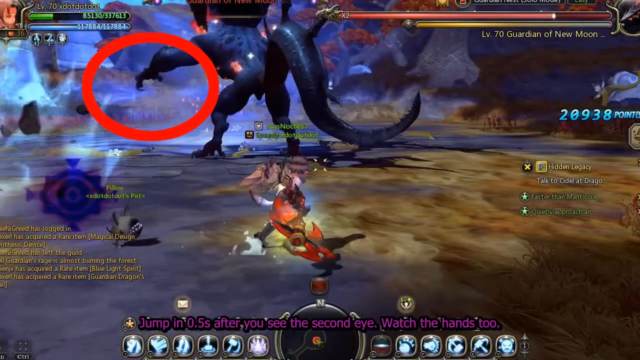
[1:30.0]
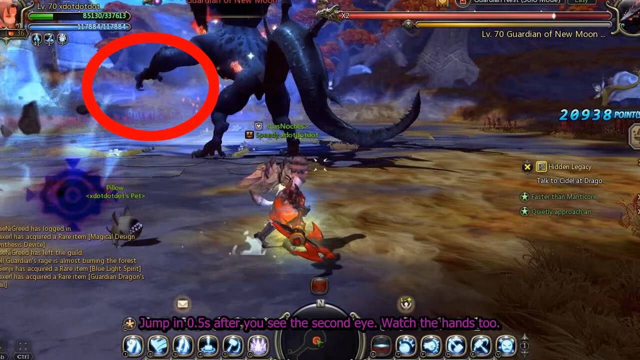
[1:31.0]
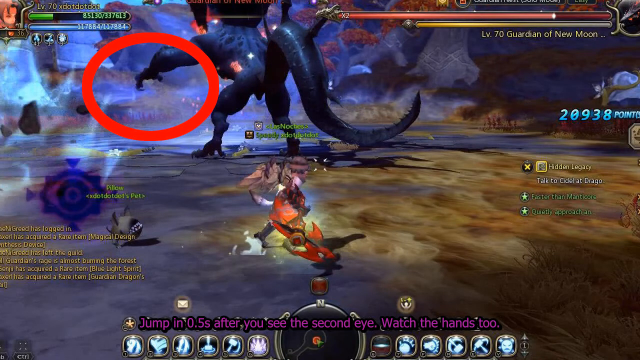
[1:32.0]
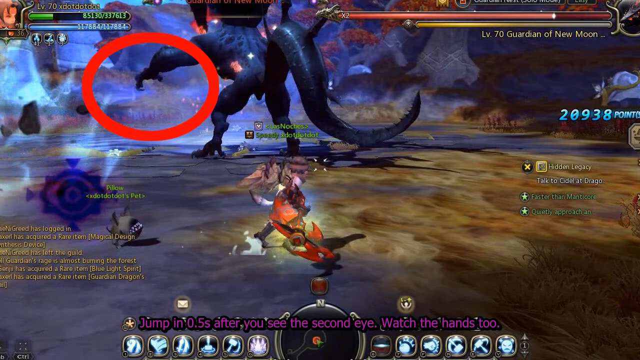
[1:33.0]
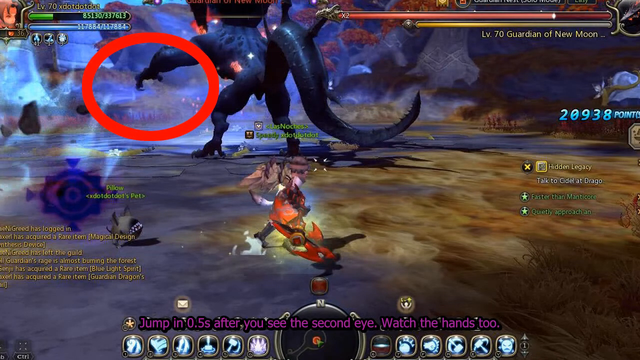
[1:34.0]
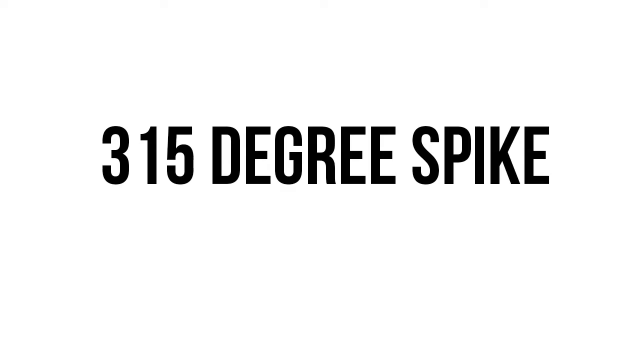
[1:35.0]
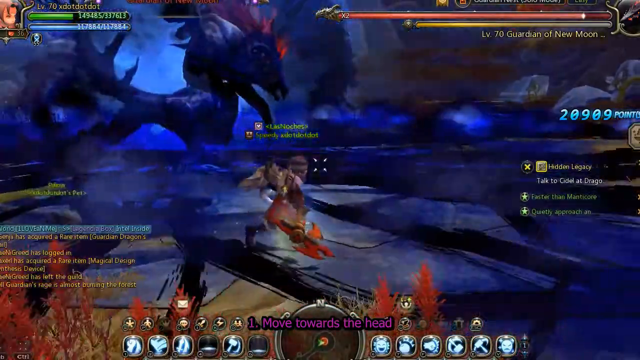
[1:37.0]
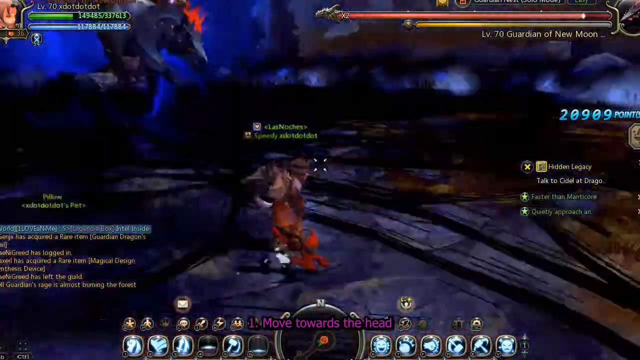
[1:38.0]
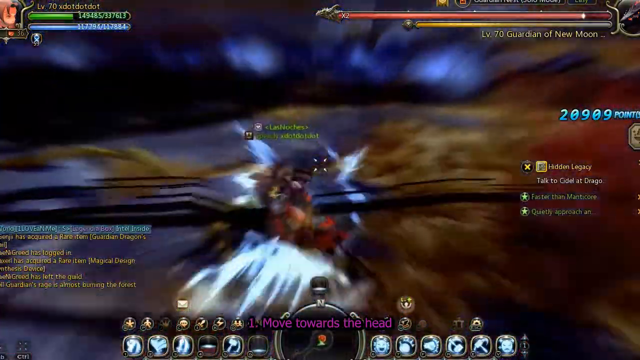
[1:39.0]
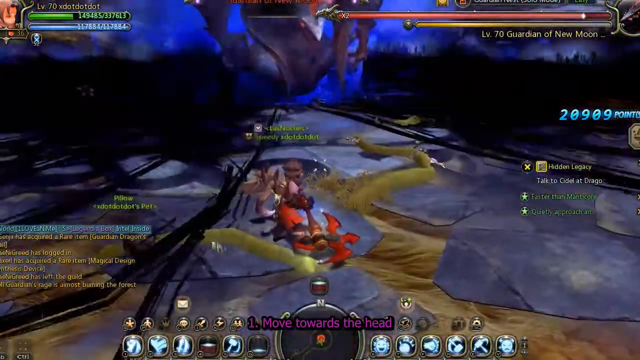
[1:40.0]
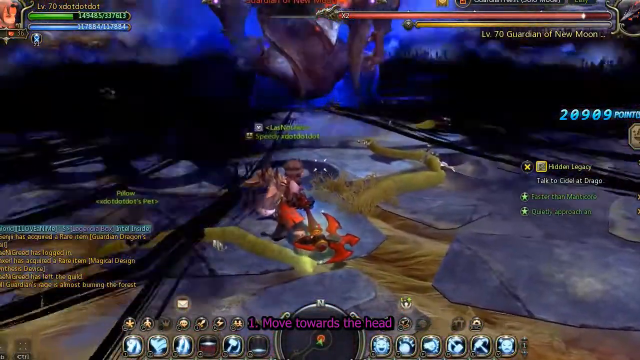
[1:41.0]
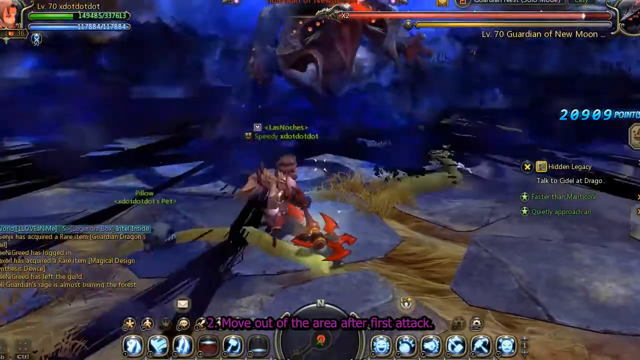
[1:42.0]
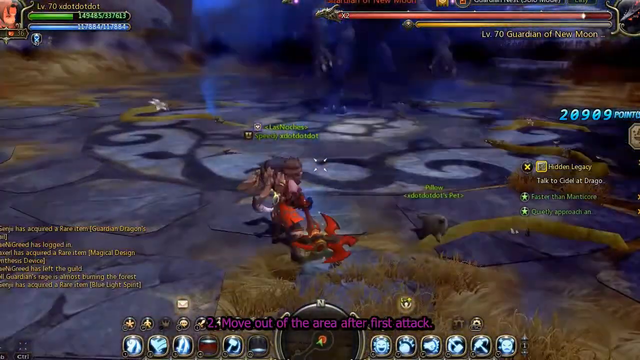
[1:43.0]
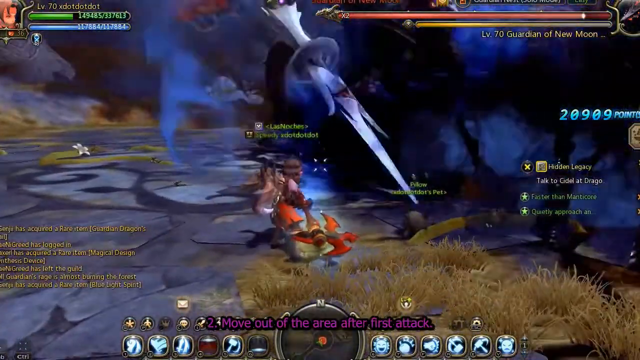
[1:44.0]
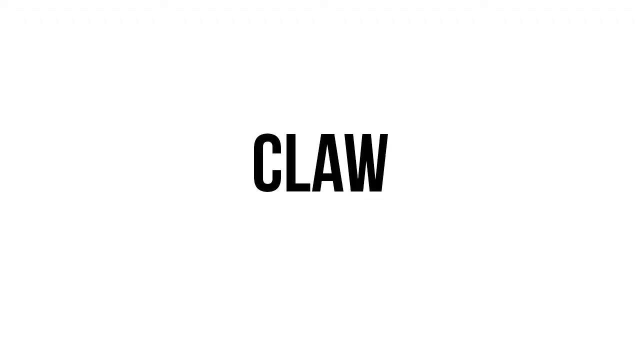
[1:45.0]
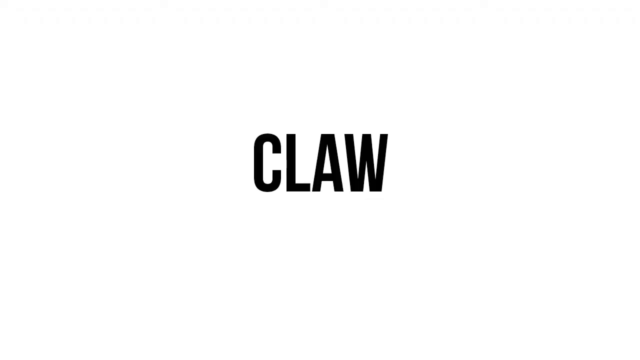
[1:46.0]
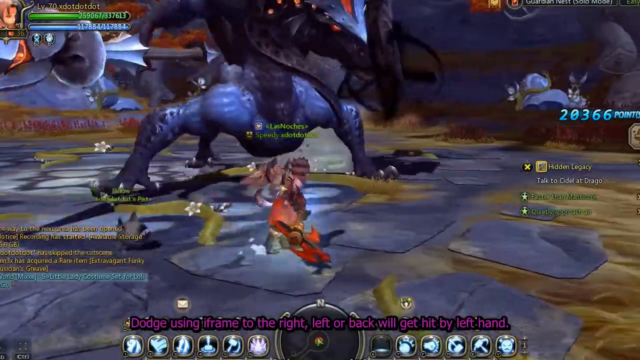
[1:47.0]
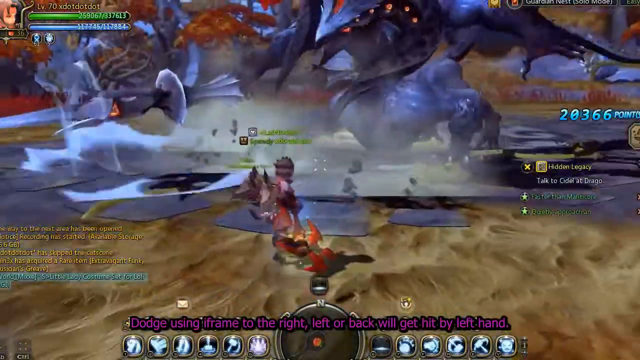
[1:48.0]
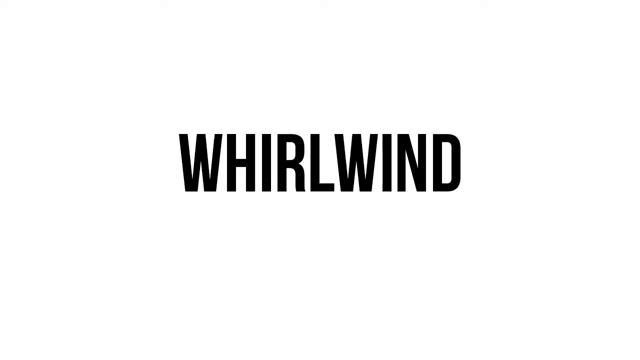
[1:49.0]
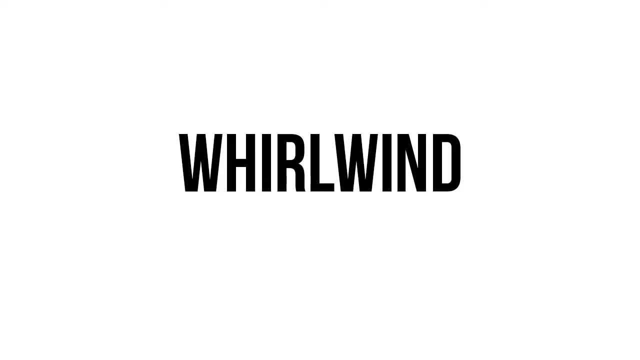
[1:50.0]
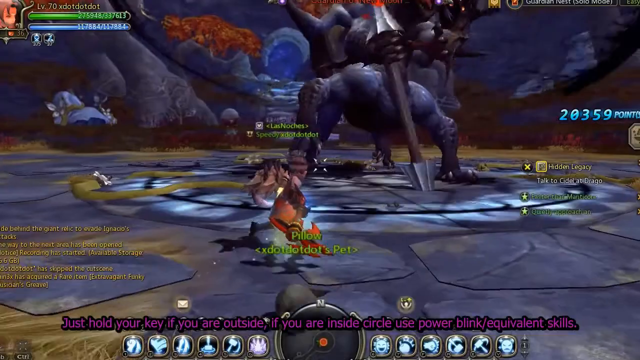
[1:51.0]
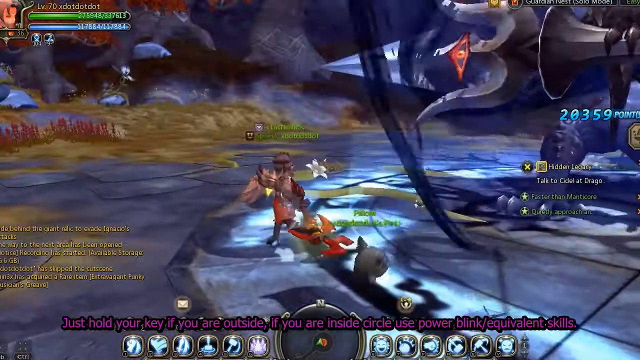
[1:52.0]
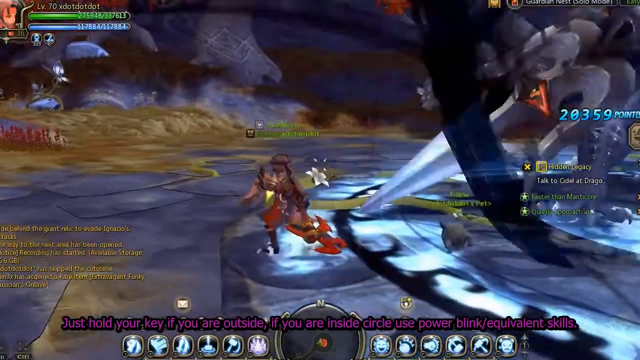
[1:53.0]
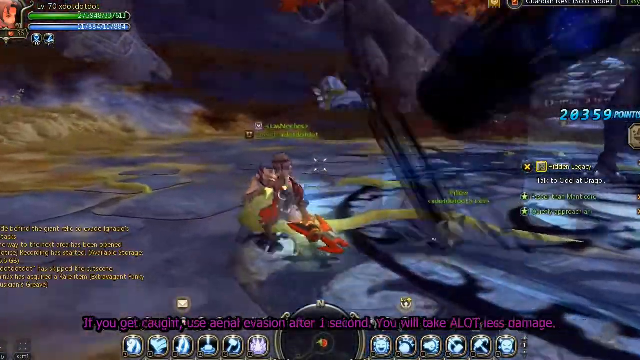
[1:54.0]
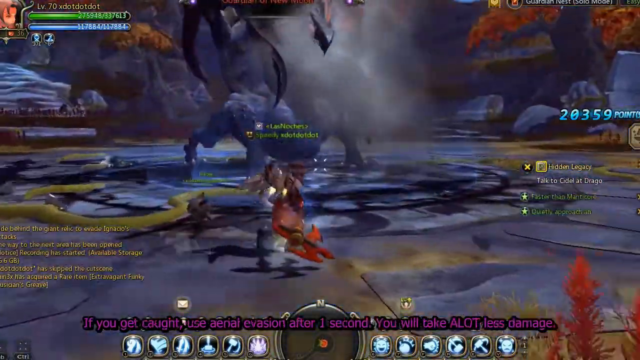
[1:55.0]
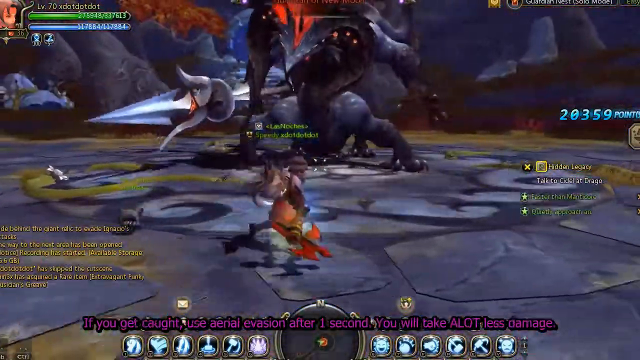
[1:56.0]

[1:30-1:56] A red circle appears near the dragon. Black text on a white background shows "315 degree spike", then "Claw", then "Whirlwind". The view flashes back to the game, and the red circle appears. The dragon's tail is visible, and the game's art looks pretty.